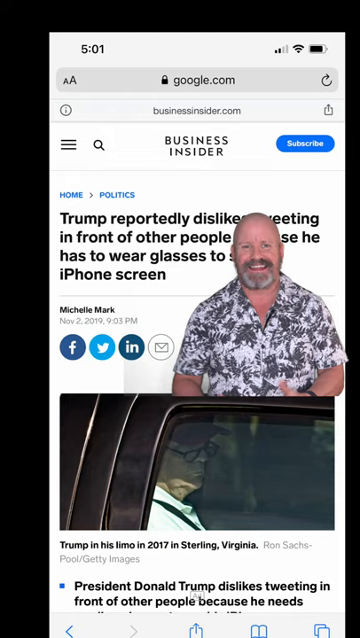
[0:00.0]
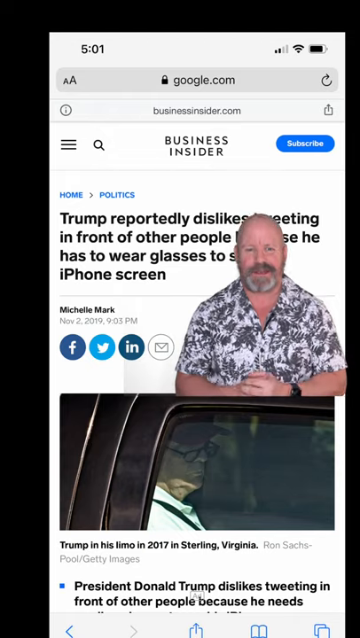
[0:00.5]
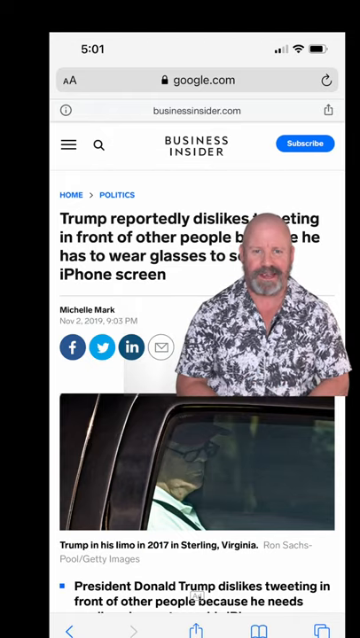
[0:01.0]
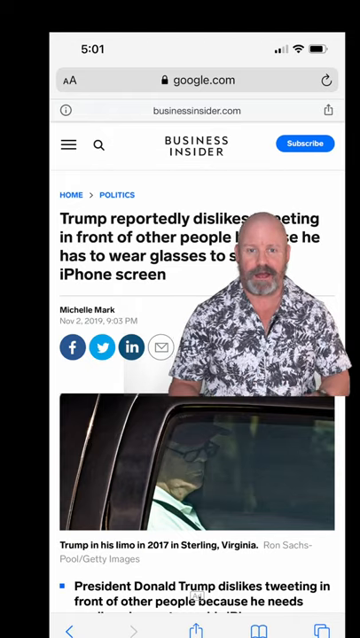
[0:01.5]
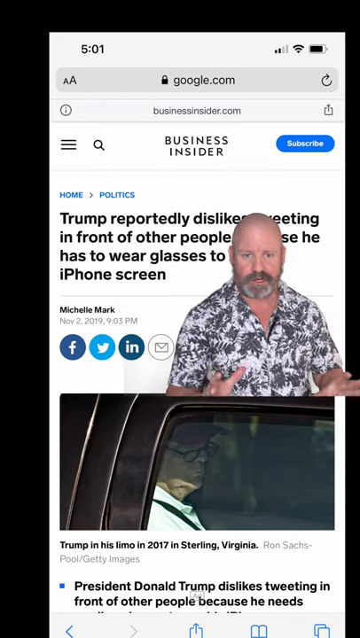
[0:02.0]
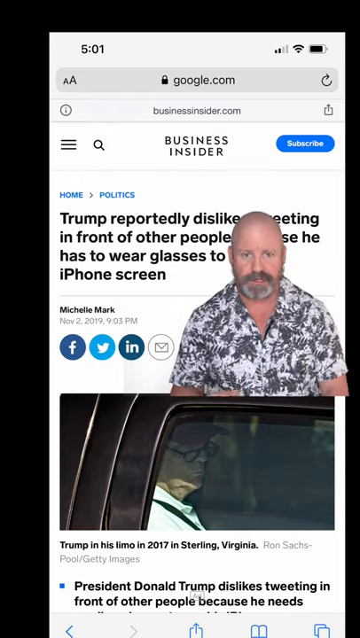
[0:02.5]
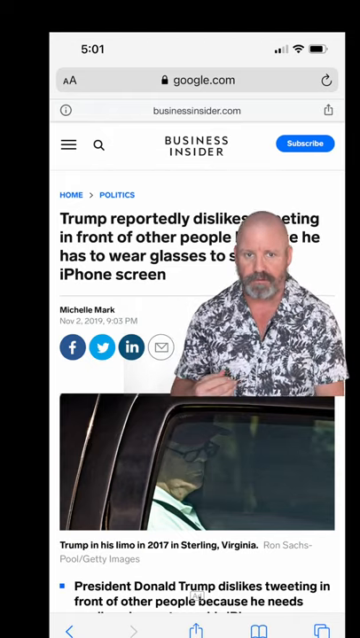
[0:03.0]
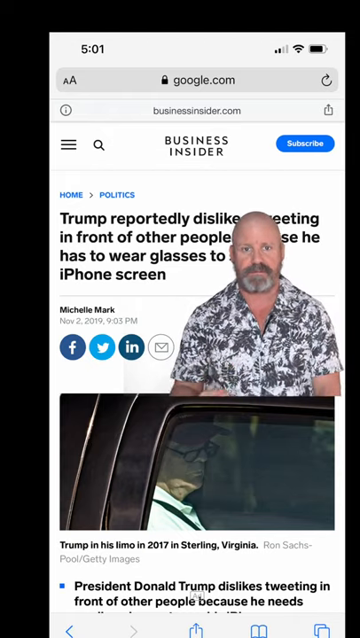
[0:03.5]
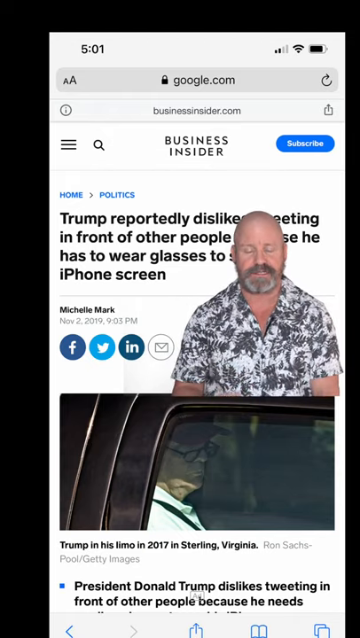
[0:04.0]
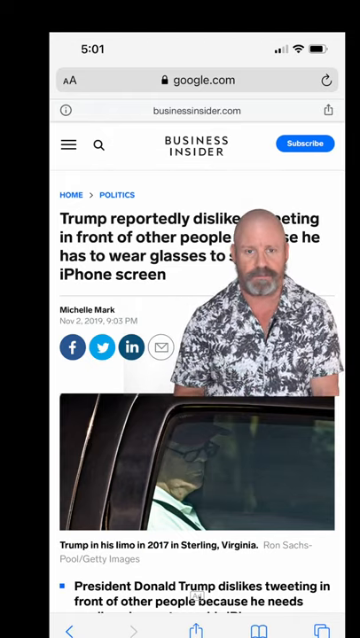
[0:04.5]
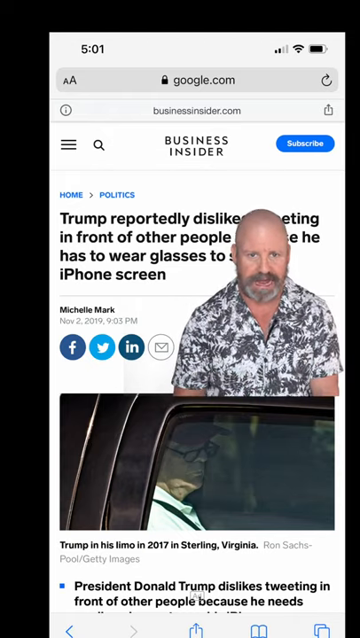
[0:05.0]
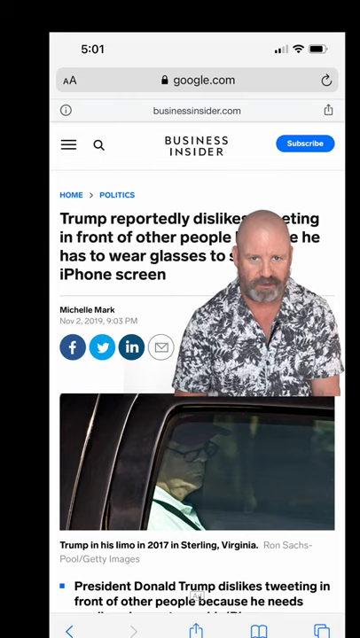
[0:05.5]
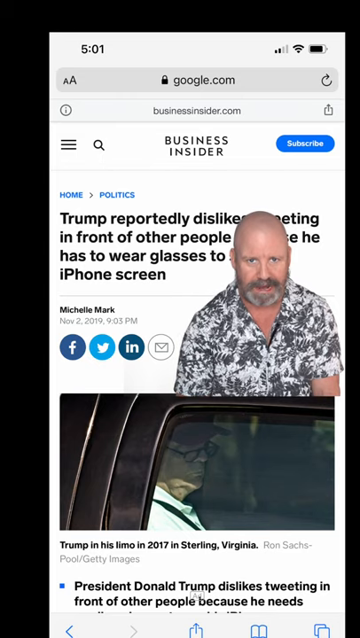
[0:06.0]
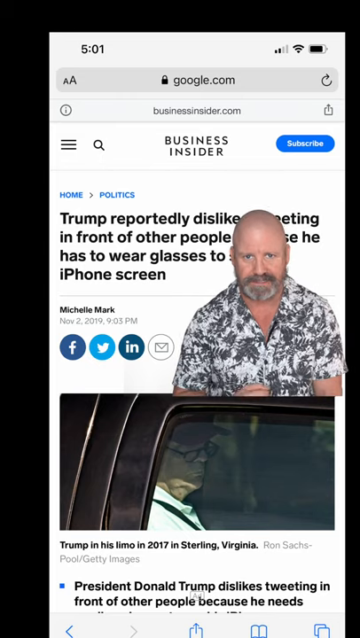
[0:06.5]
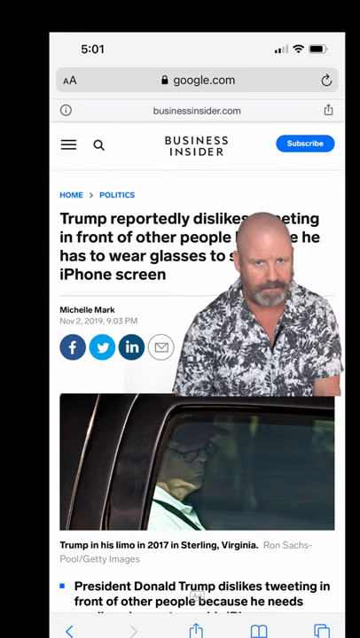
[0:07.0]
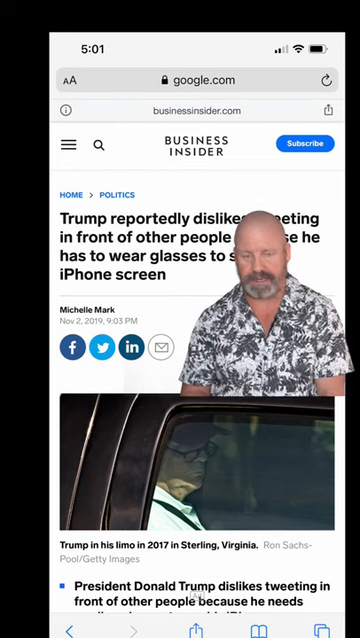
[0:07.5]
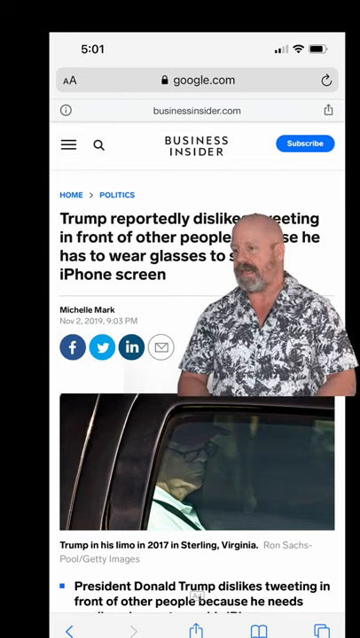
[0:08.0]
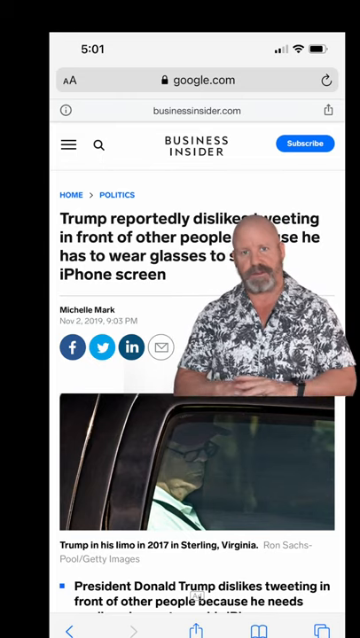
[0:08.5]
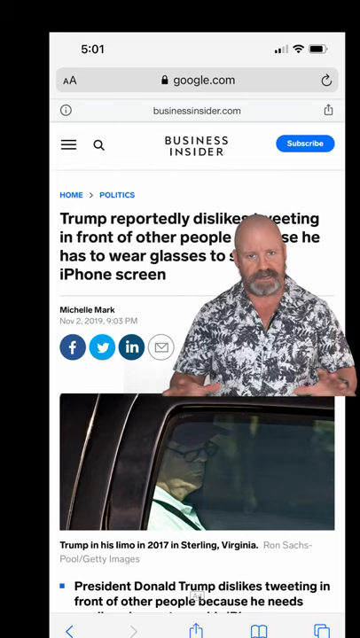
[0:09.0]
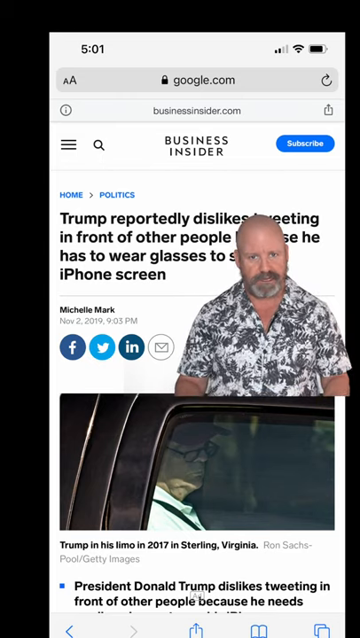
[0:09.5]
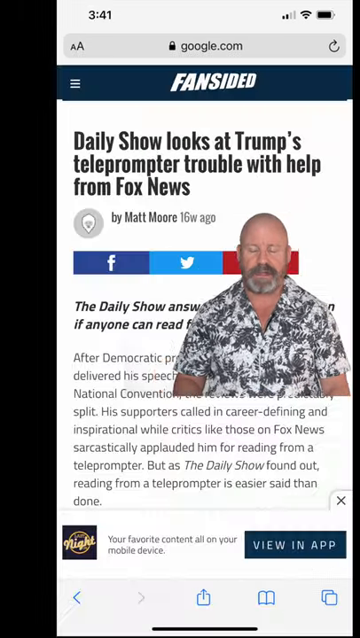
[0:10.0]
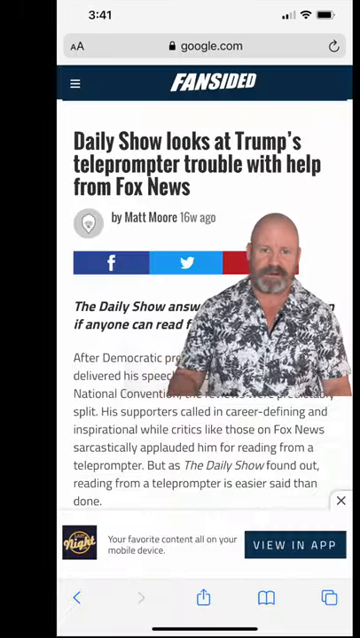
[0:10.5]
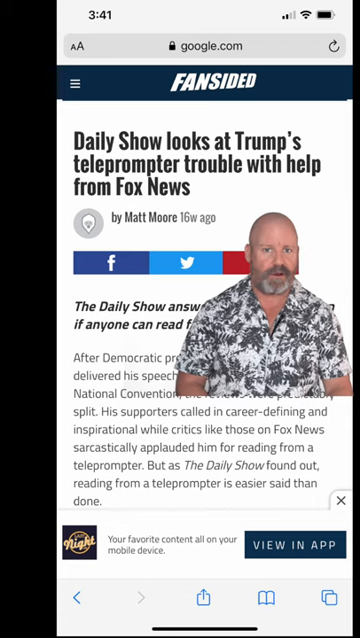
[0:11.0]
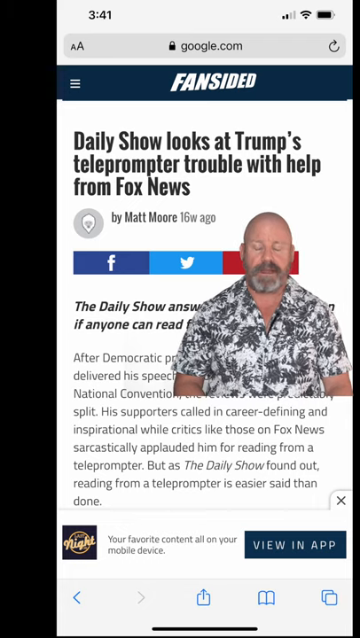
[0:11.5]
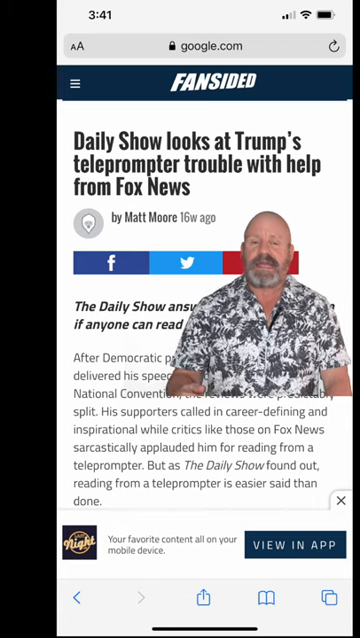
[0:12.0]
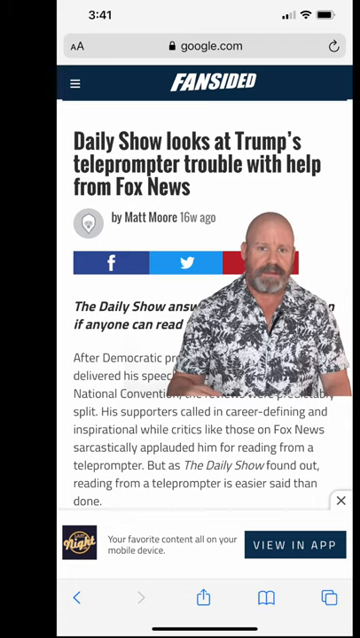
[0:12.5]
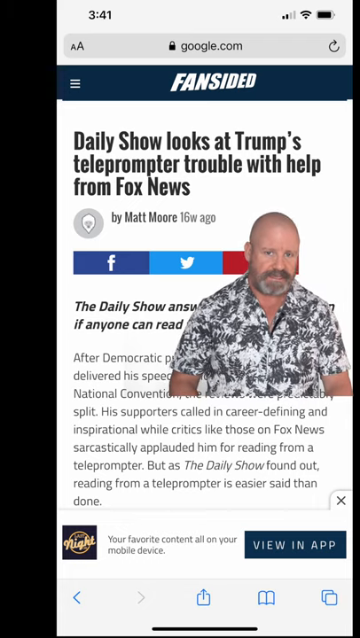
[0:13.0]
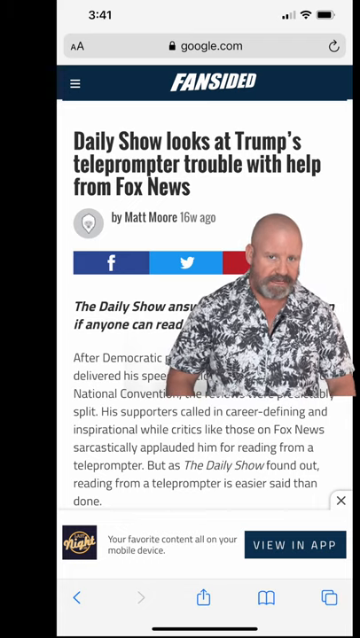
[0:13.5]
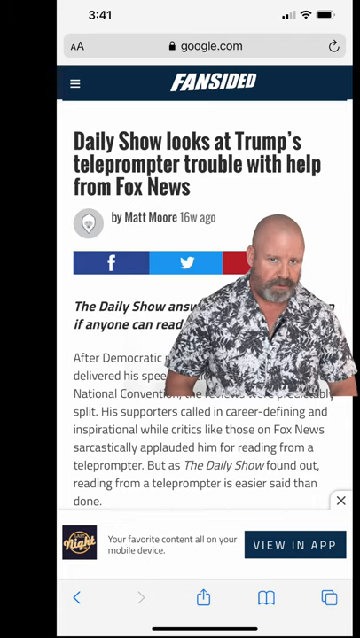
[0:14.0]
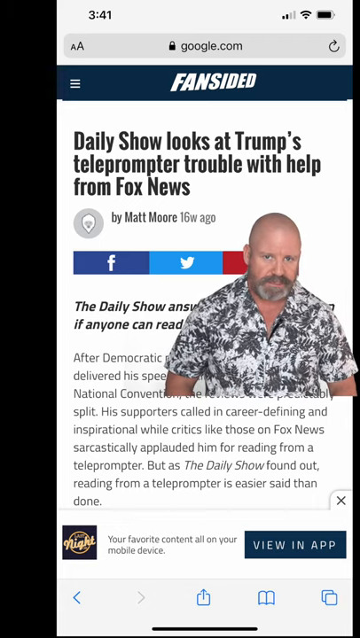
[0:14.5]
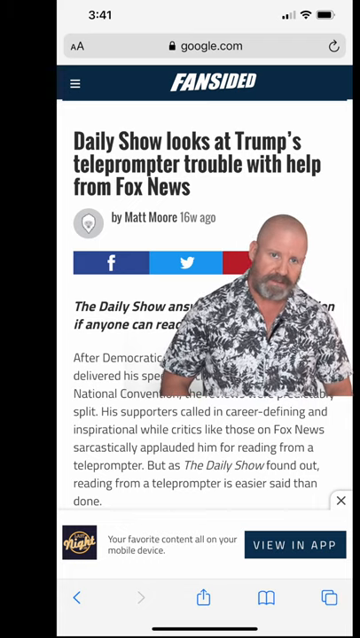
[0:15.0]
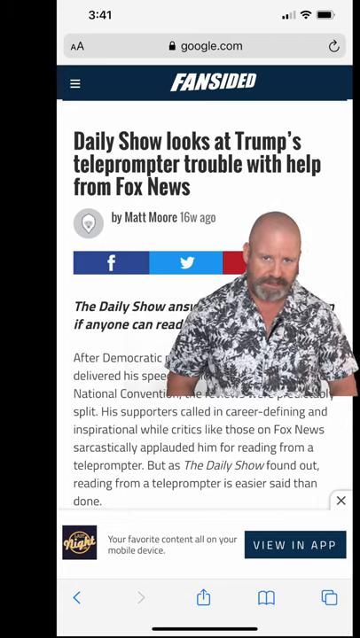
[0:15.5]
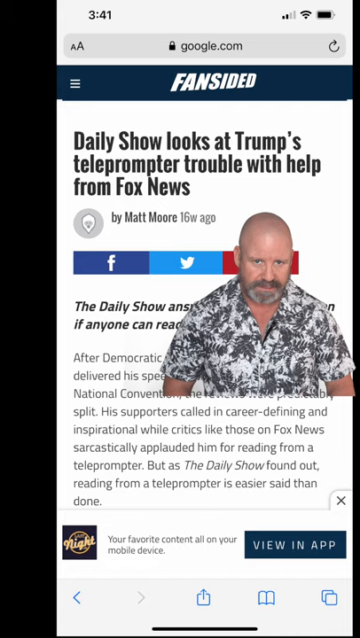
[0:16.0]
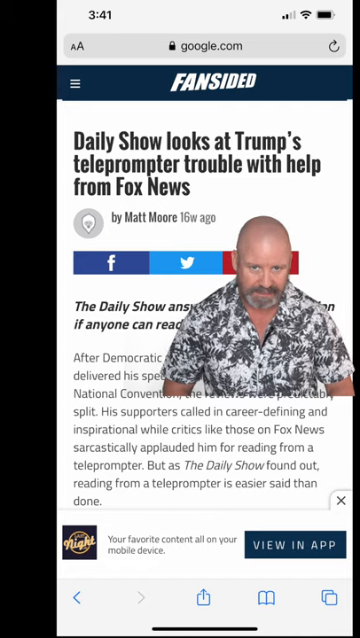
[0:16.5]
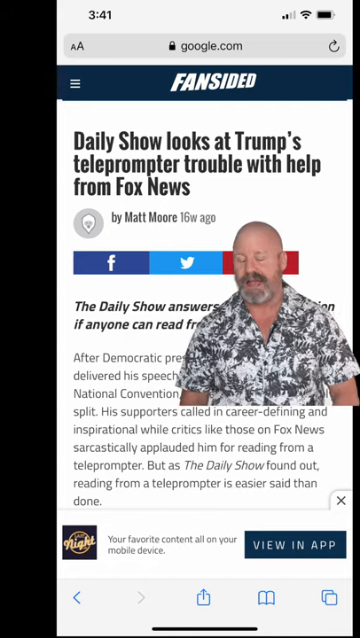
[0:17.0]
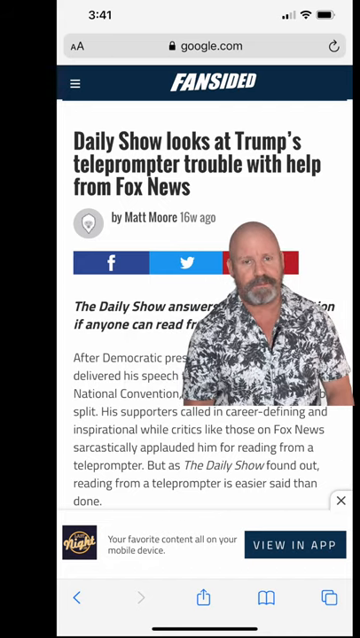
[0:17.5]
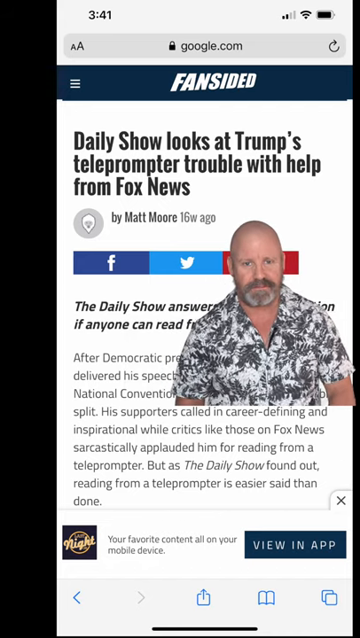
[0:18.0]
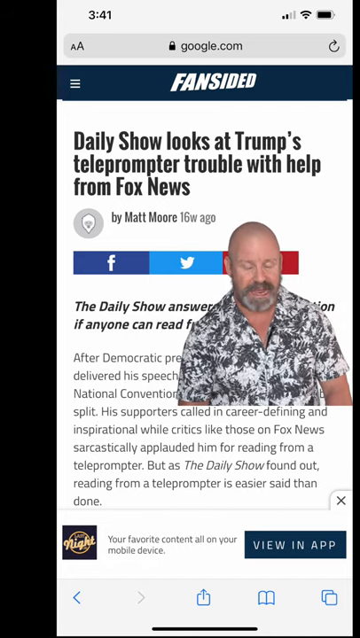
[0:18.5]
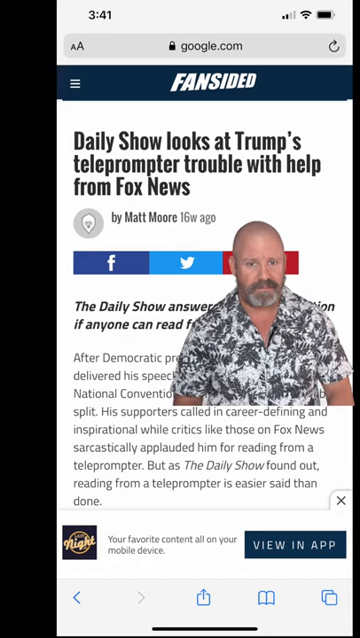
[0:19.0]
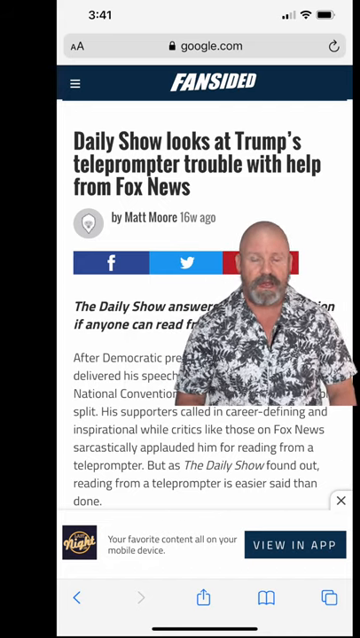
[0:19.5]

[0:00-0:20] A cell phone screen shows what looks like an article, with a man superimposed on top of it, talking. At the very top are phone symbols such as the time and the battery charge, and below them a bar that says "google.com". The article is on a website called "fansided". The man is of medium build, white, with a bald head and a thick mustache and beard that has gray in it. He wears a white shirt with some sort of black design on it. Behind him is the article's title, "Daily Show looks at Trump's teleprompter trouble with help from Fox News", by "Matt Moore". As he talks, he looks down a little, back up, and then down a little more, and he gestures somewhat with his hands. The view then switches to text behind him that reads "Trump reportedly dislikes", followed by two unclear words, then "in front of other people"; the next word is blocked by the man's head, and then it reads "he has to wear glasses to", with the following word presumably "see", and then "iPhone screen". At the bottom is a picture of what appears to be Donald Trump wearing glasses, a very old man sitting in a car, seen from the side through the car window. A caption underneath reads "Trump in his limo in 2017 in Sterling, Virginia". He has baggy skin under his chin, his mouth is turned down in a frown, and he wears what looks like a baseball cap, apparently a red one with his brand on it.